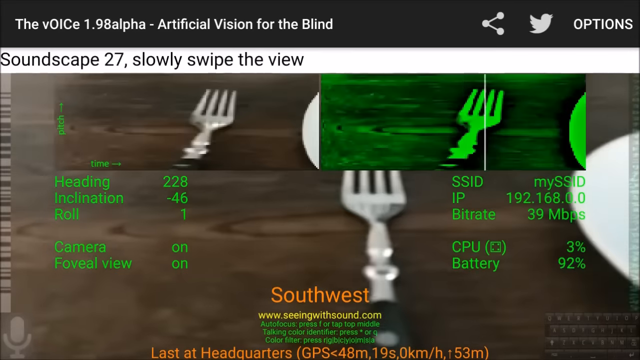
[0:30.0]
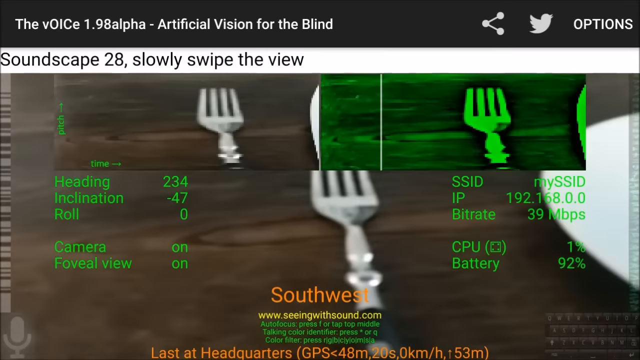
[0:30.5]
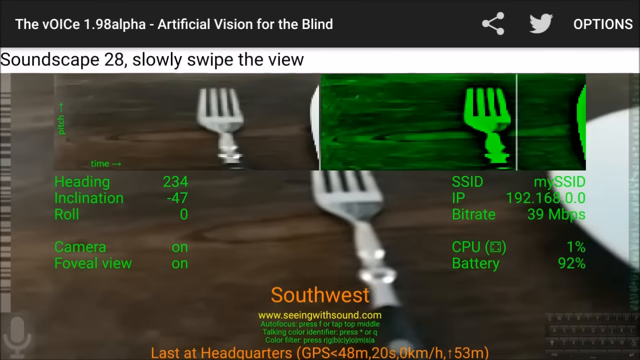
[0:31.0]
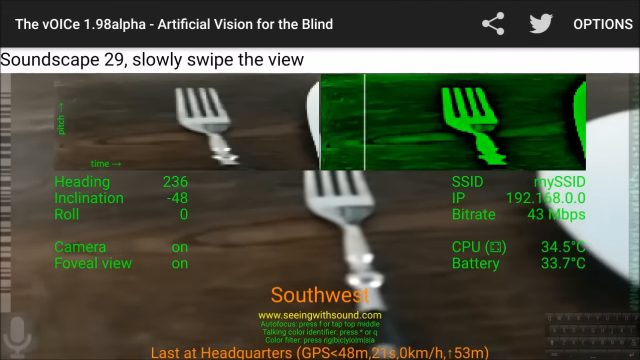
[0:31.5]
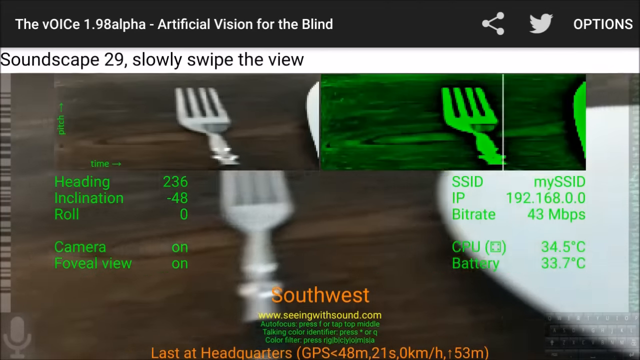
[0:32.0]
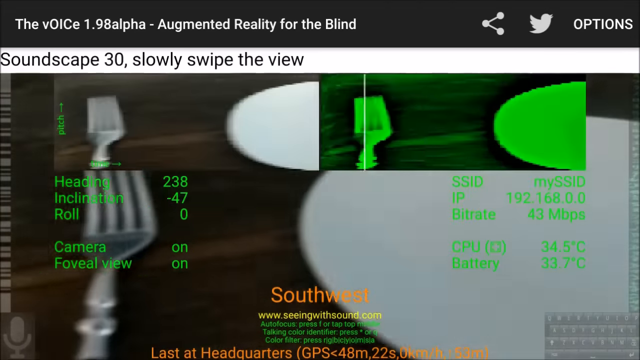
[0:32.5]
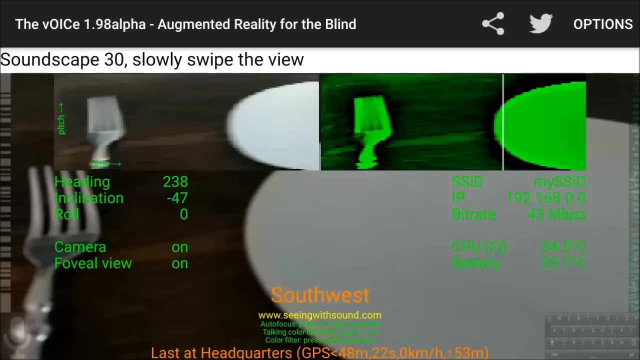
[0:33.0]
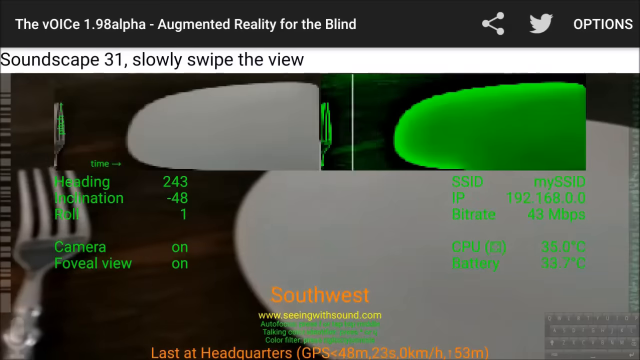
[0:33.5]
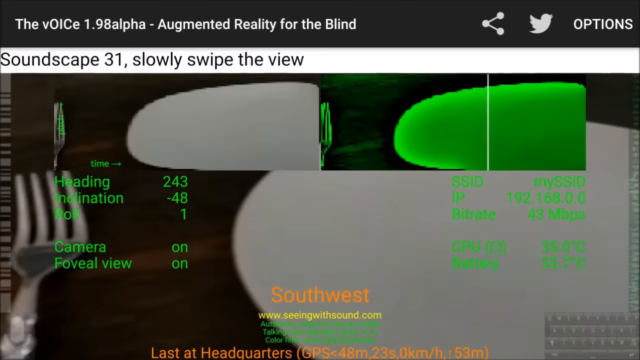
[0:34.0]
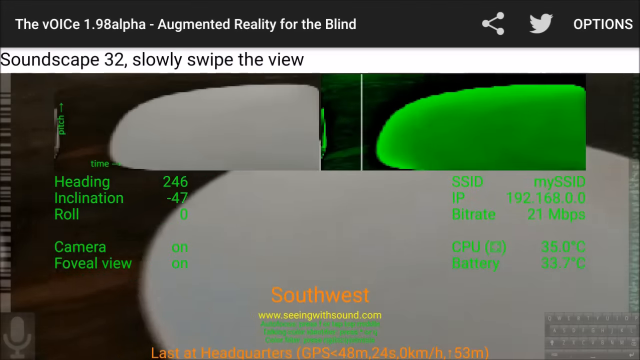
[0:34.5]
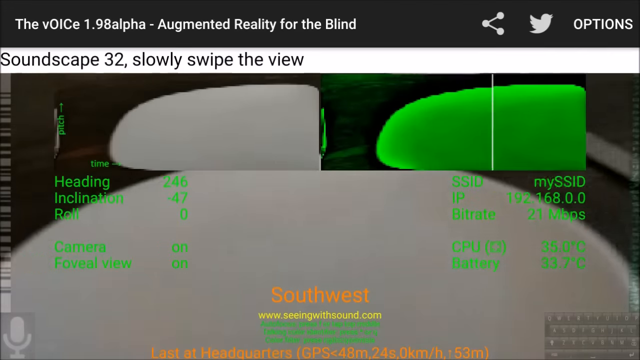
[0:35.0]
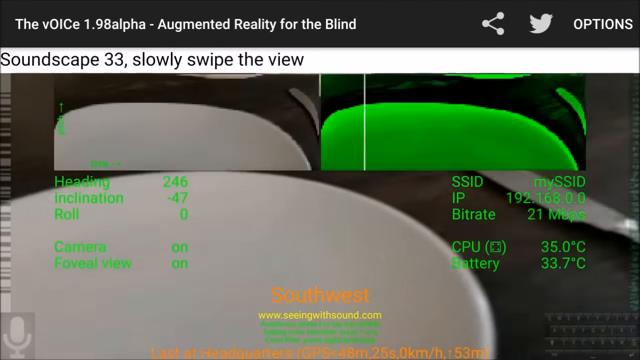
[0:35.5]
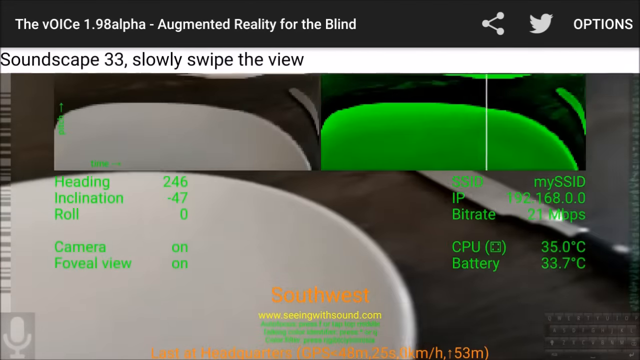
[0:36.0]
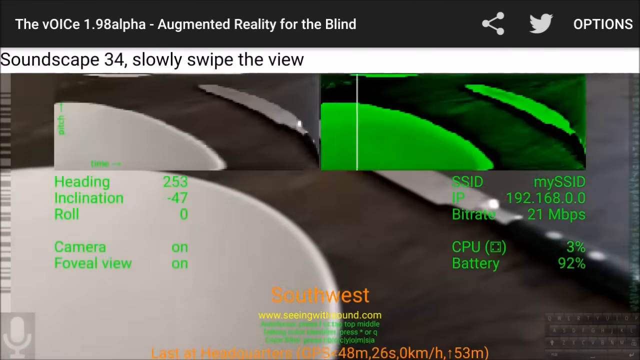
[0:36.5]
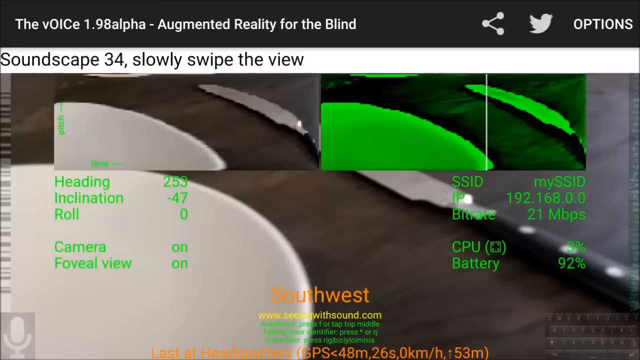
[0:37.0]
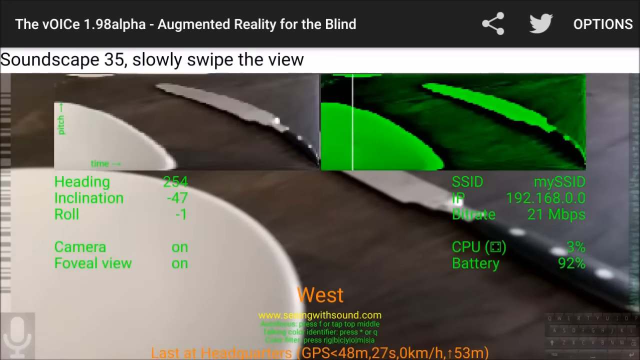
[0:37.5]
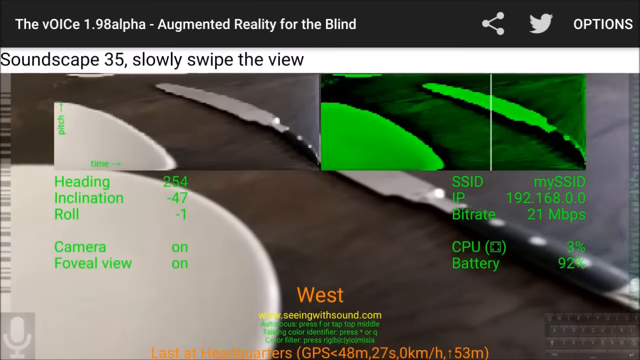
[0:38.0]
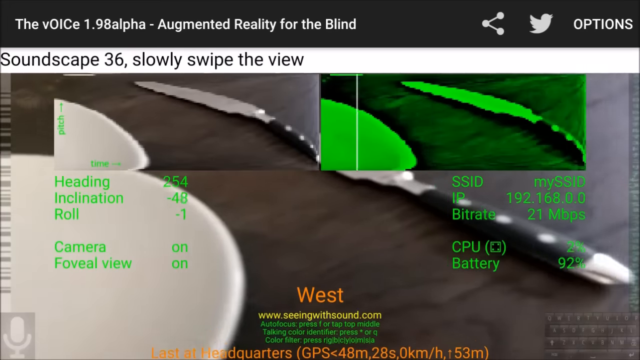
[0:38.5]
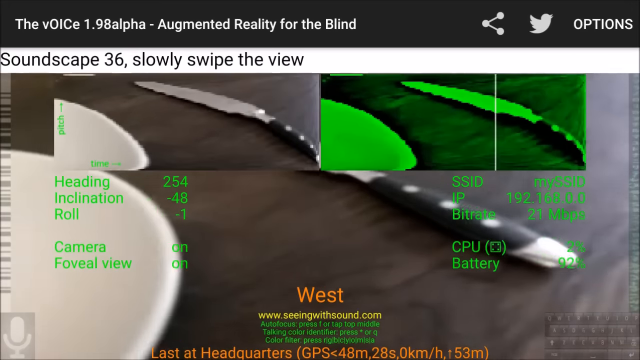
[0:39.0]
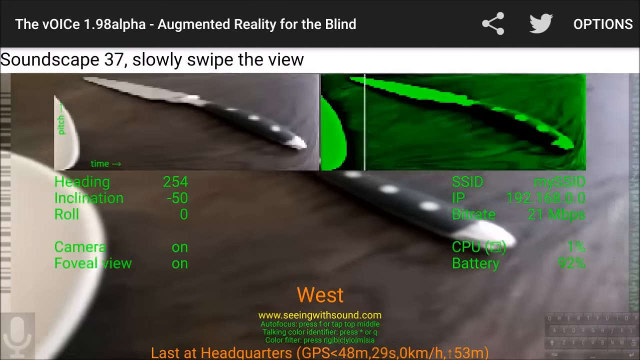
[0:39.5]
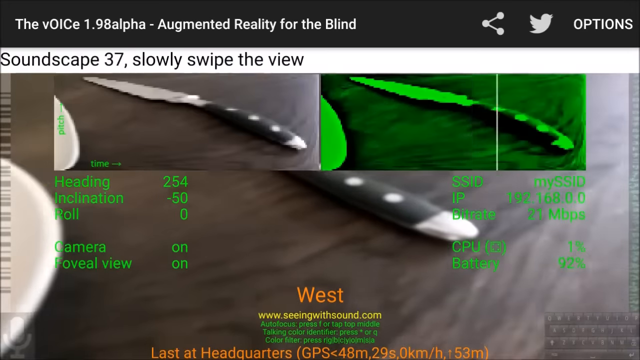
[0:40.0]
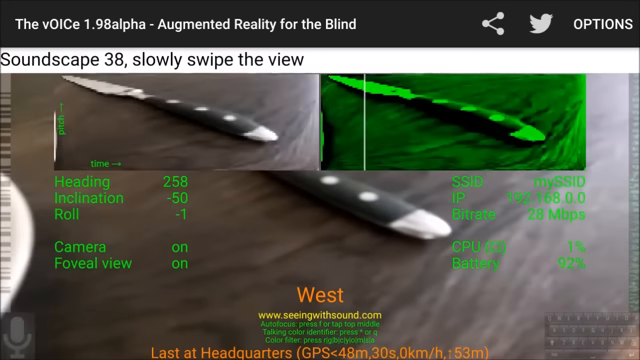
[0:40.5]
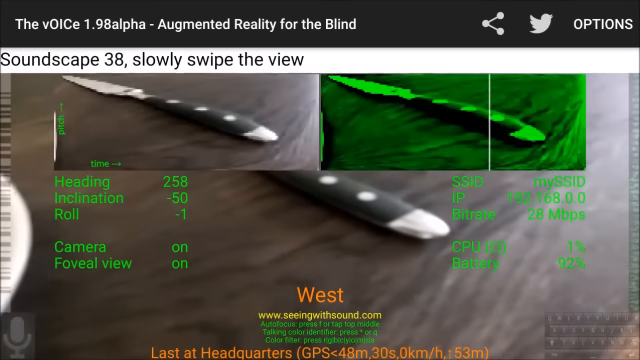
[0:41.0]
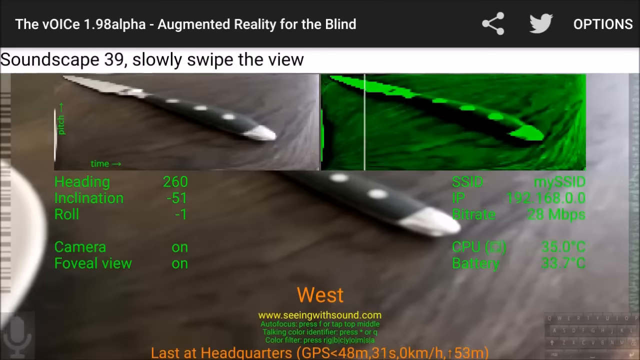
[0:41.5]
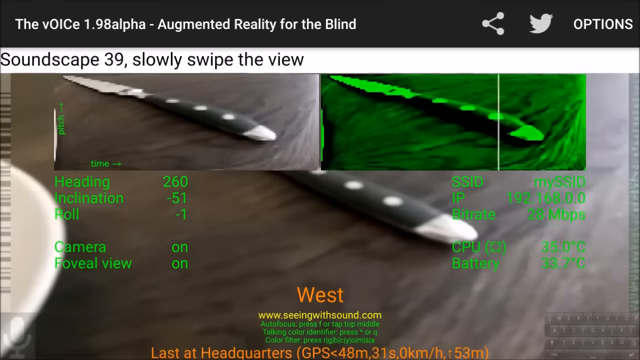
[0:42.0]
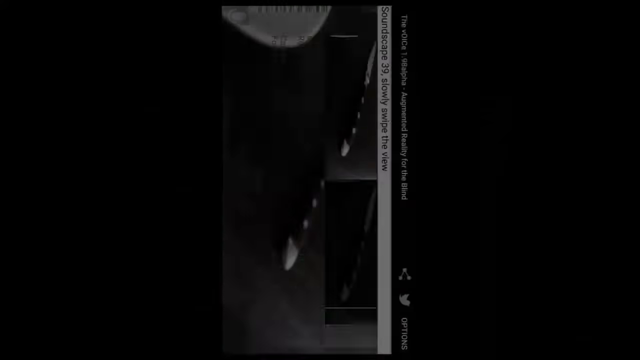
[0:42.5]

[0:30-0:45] The person scans the fork, then the plate, then the knife on the table. The on-screen data points include heading, inclination and roll as numerical values; below them are camera and foveal view indicators that check whether these are on for the voice app to work. On the right side, text lists "ssid," the IP address, "bytrate," "cpu" and the battery, probably things needed for the app to run. At the top right are what look like a share button, a Twitter button and an options button. At the top left the text reads "the voice 1.8 alpha artificial vision for the blind" and "soundscape 27 slowly swipe the view." The video ends on a black screen.